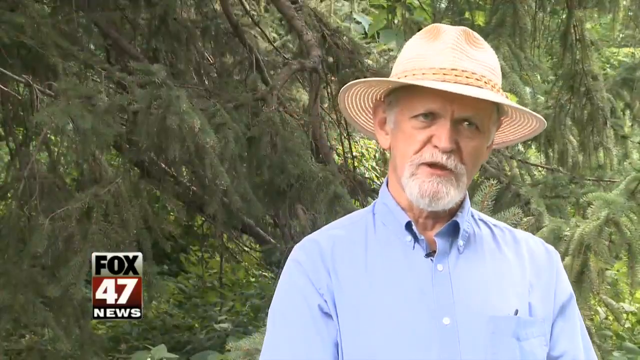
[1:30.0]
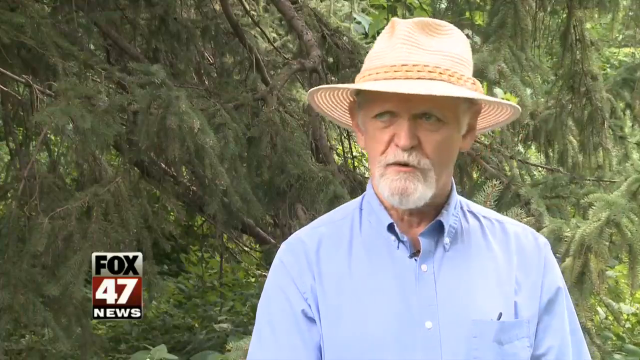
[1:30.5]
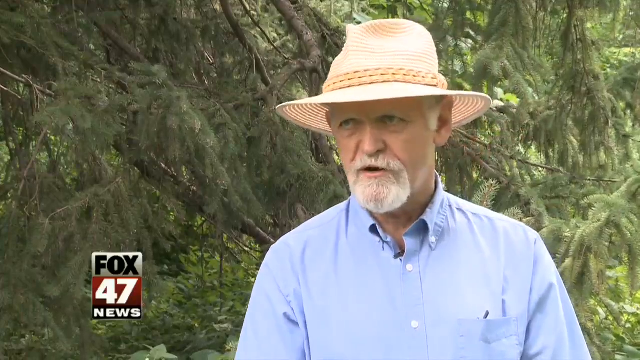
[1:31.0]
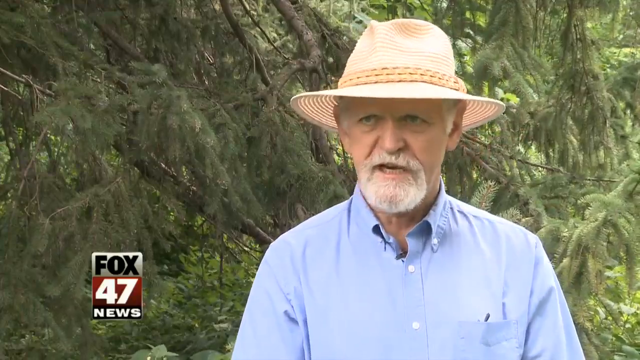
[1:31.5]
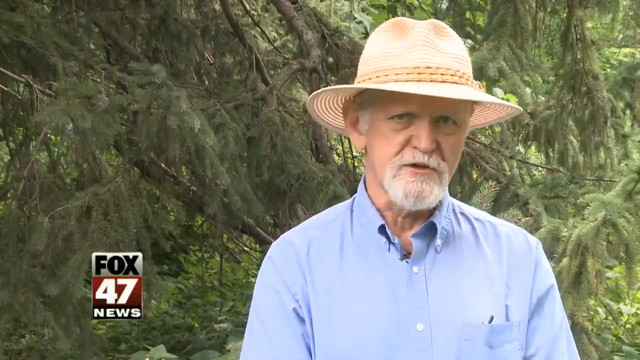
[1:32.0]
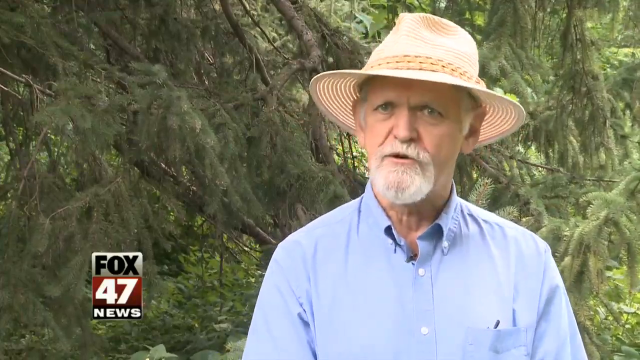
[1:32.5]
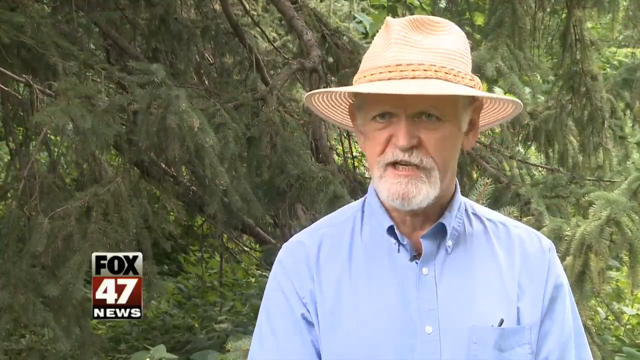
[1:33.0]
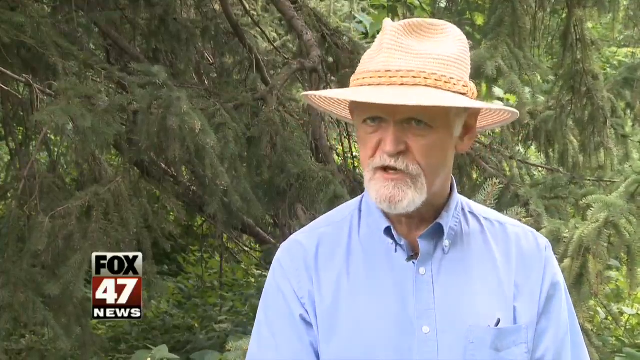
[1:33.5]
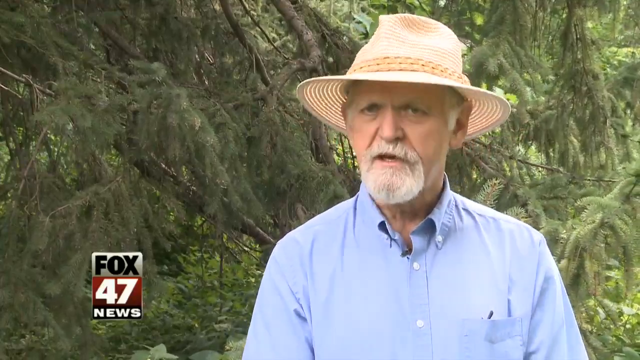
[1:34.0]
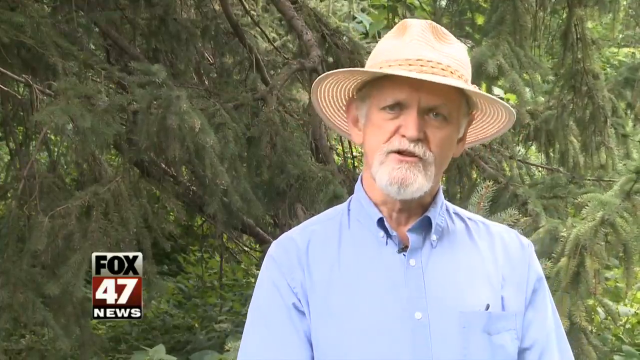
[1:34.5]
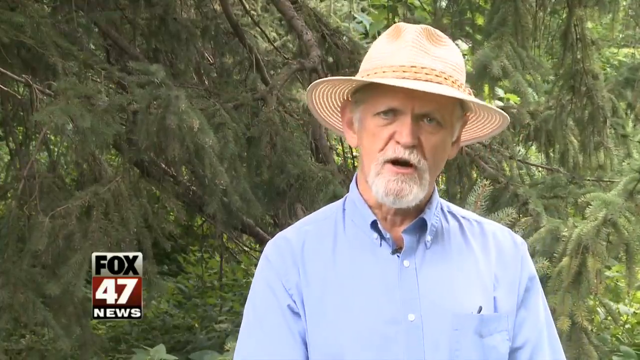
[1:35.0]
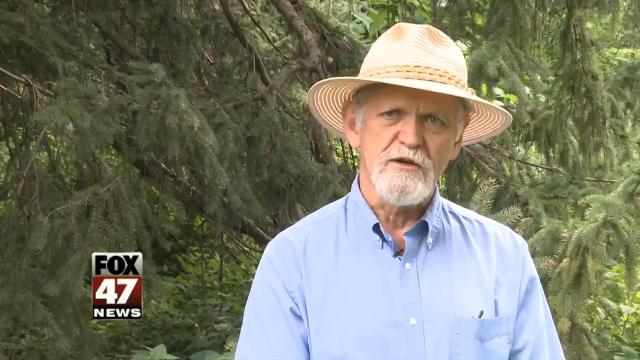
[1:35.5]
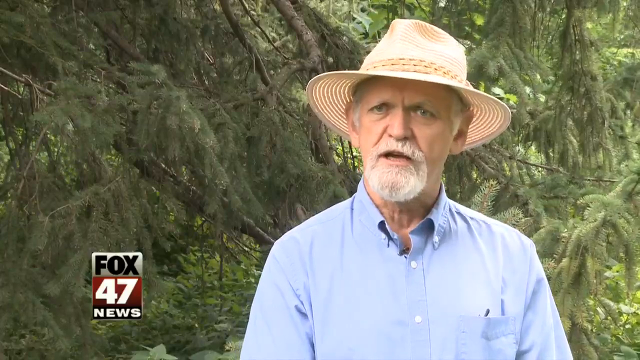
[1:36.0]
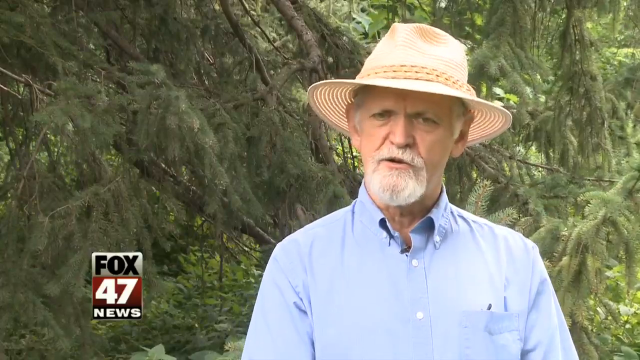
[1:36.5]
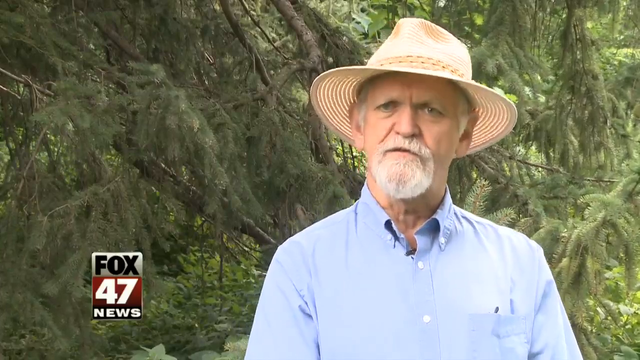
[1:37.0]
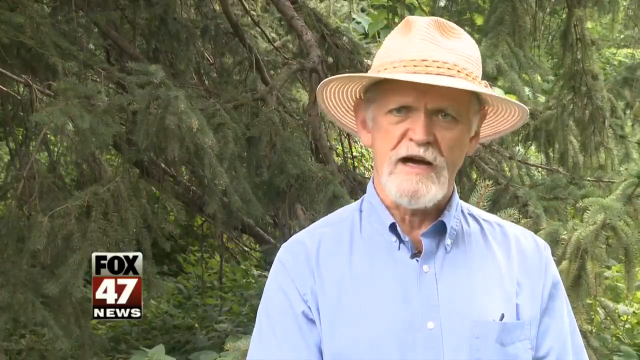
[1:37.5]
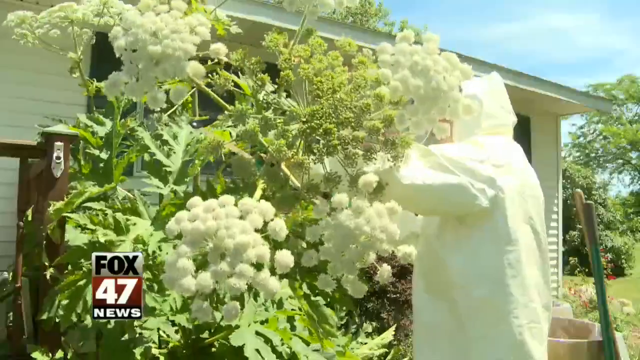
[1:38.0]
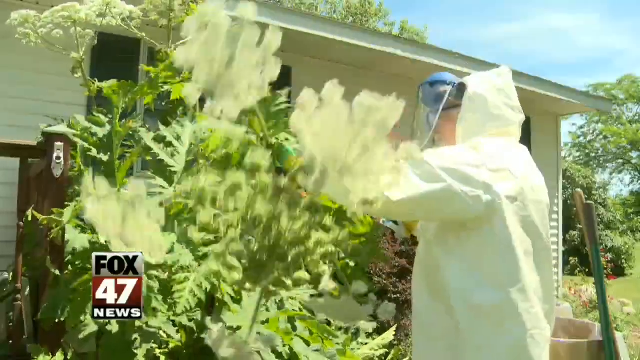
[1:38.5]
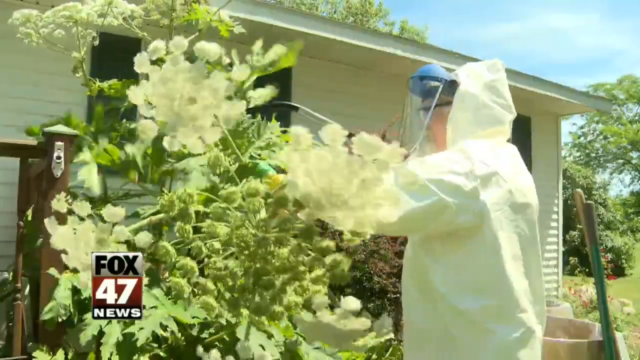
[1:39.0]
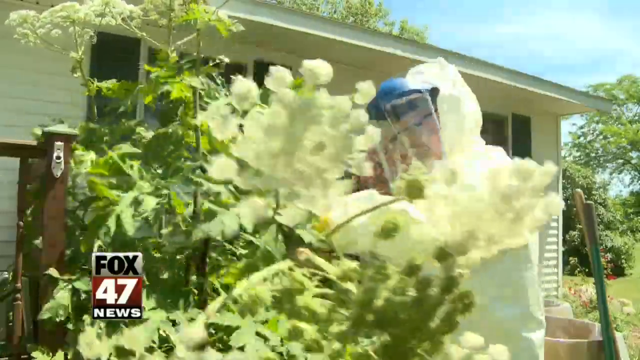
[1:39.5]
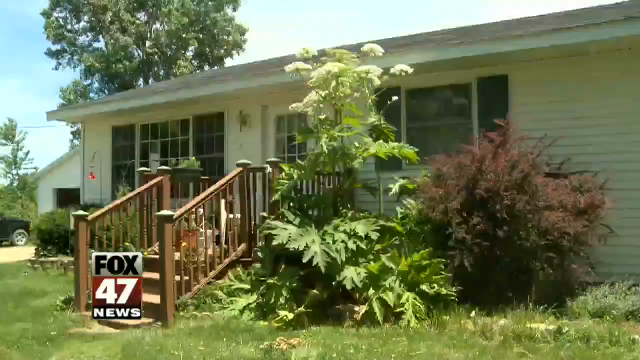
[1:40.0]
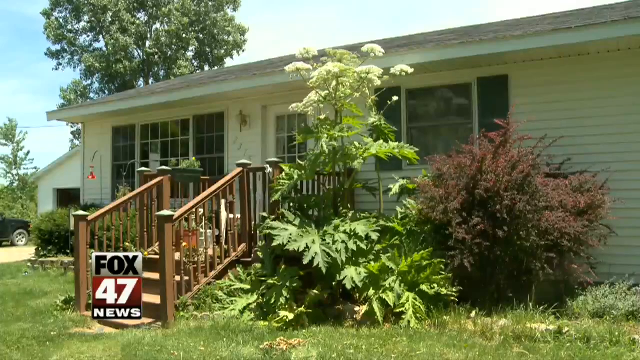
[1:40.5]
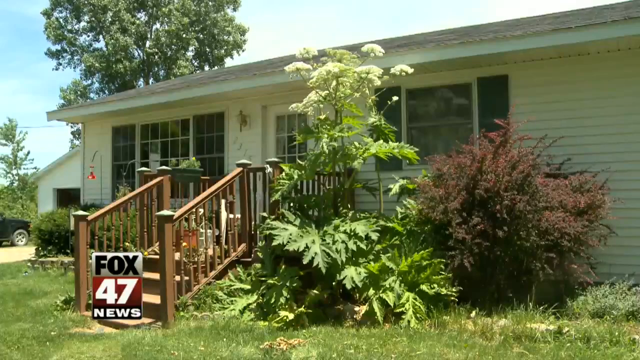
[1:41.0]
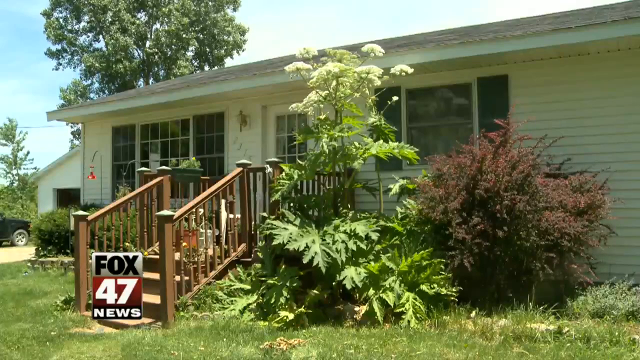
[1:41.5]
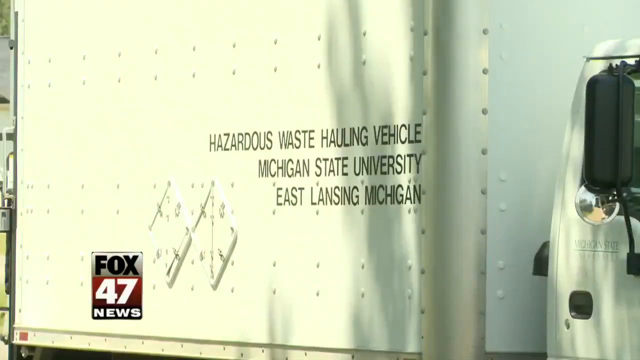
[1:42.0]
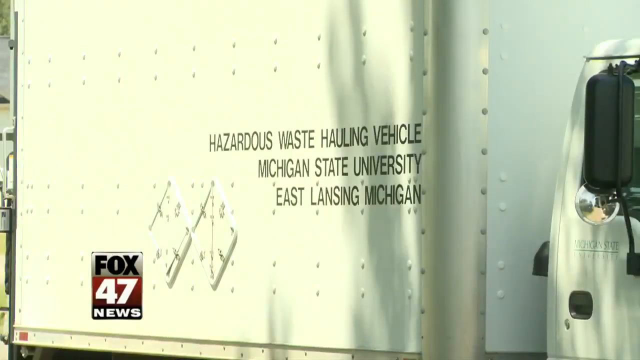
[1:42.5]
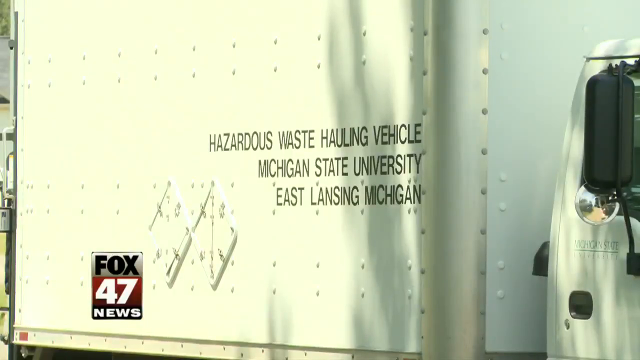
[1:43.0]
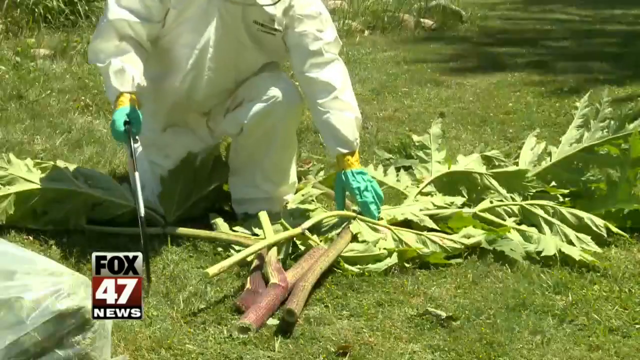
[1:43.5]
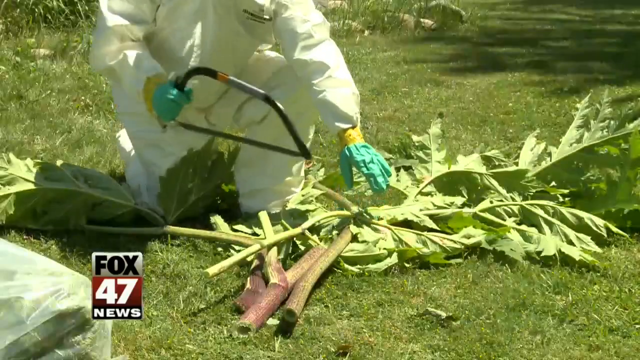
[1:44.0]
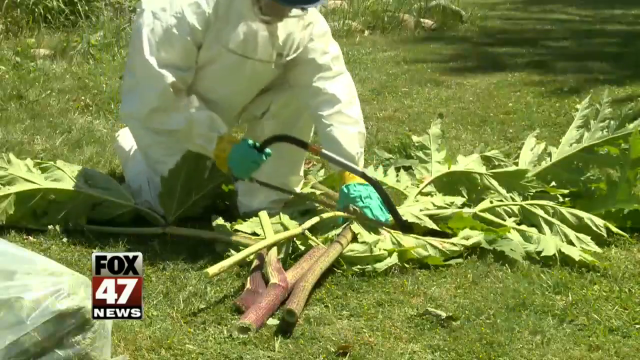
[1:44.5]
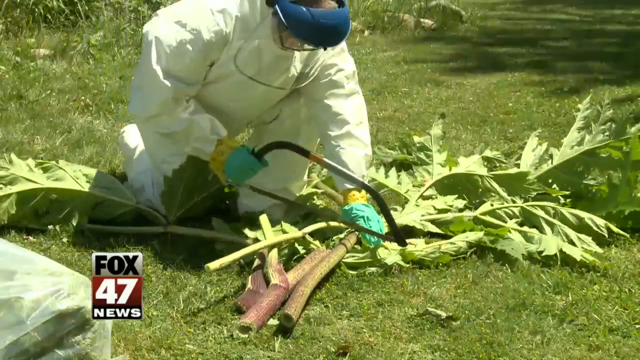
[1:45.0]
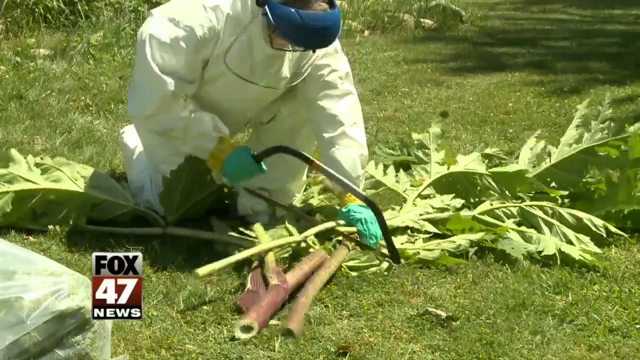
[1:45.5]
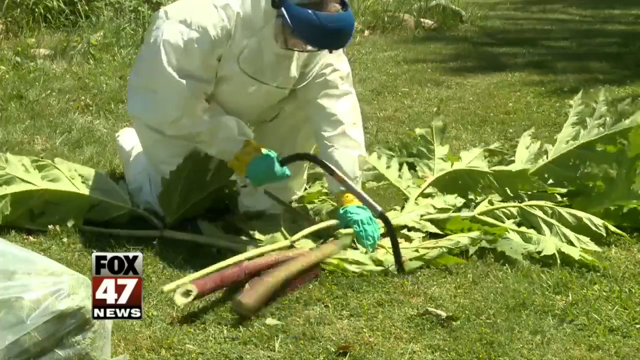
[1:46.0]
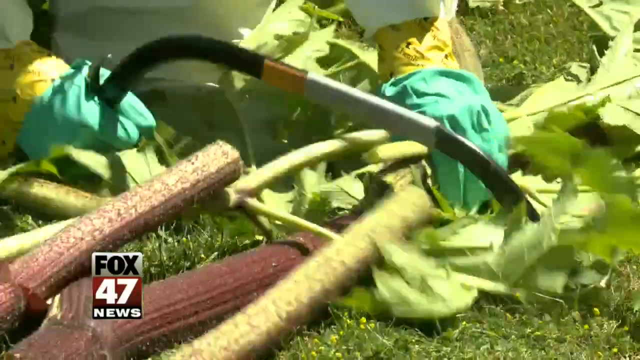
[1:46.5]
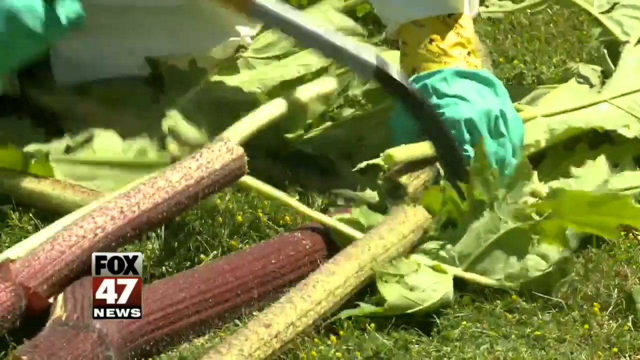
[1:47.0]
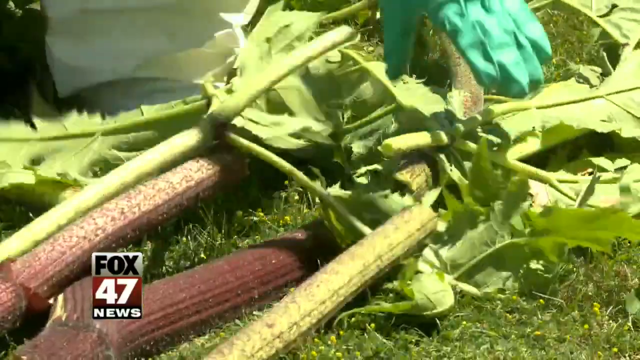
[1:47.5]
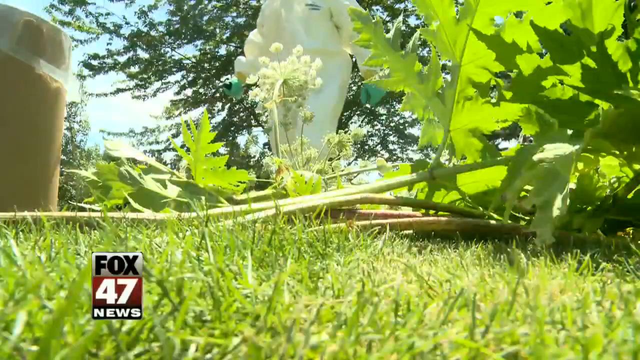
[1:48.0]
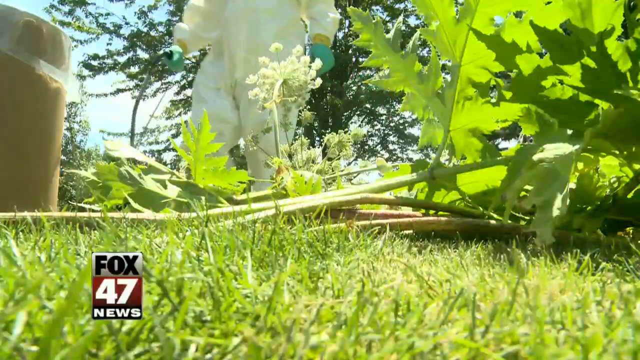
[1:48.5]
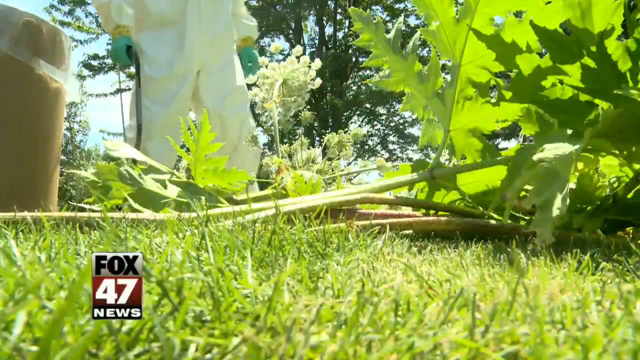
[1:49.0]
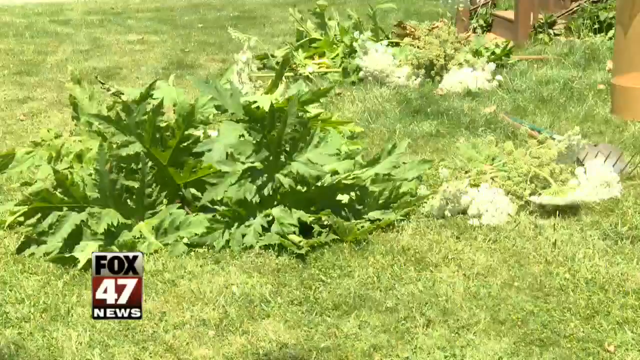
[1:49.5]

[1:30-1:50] A white man in a blue shirt with a goatee and a beige hat speaks to the camera, looking from right to left and shaking his head as he speaks. A man in a PPE uniform then cuts down a tree with green leaves and white flowers; these are hogweeds. They are in front of a house with brown balustrades and stairs going into the house, and there are many different types of flowers around there. Next, a van reads "hazardous waste Michigan State University". A man then cuts the stems of these trees with a hacksaw, and the trees are placed on the ground. The person using the hacksaw is in full PPE uniform and wears eye protective gear as well.